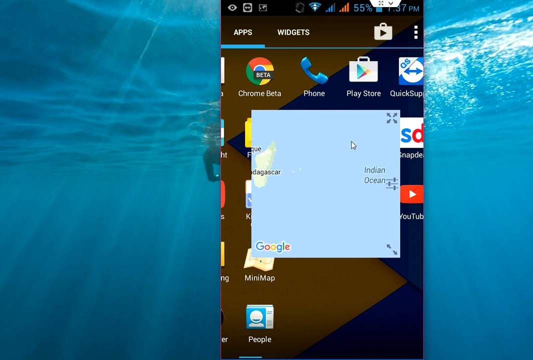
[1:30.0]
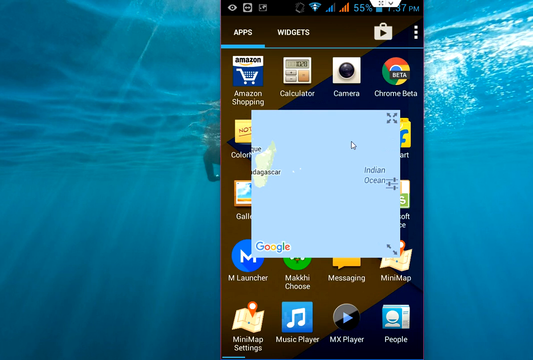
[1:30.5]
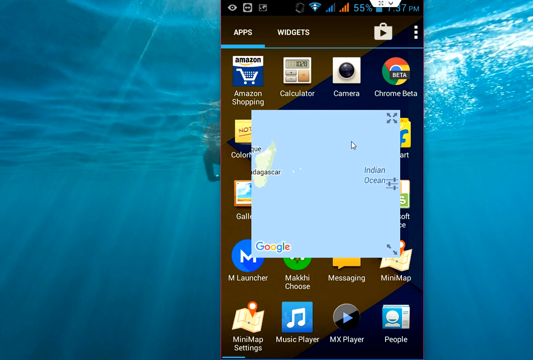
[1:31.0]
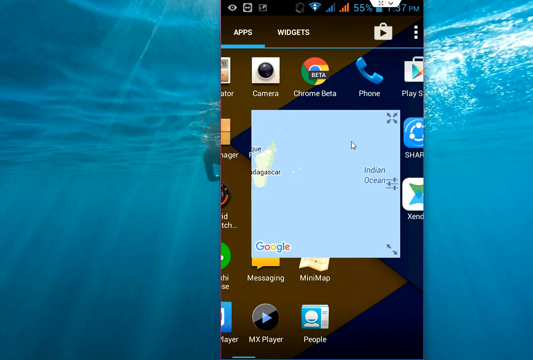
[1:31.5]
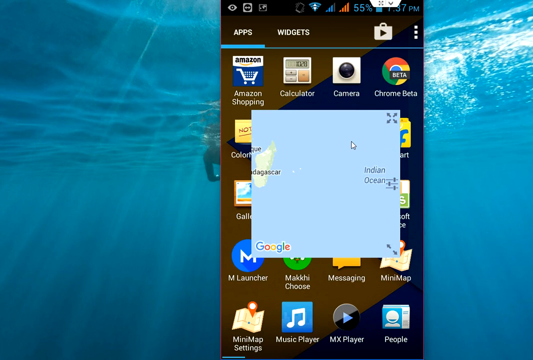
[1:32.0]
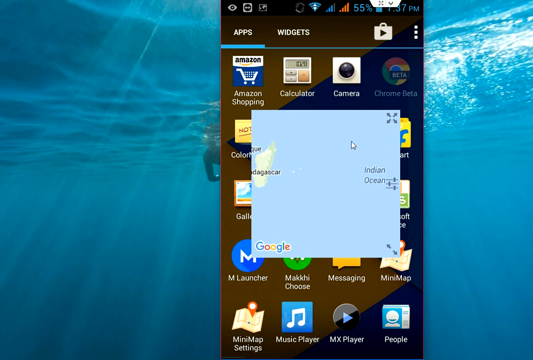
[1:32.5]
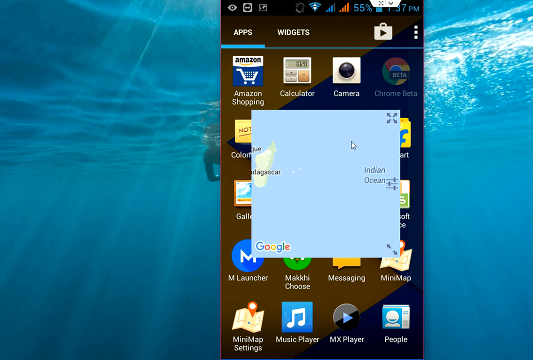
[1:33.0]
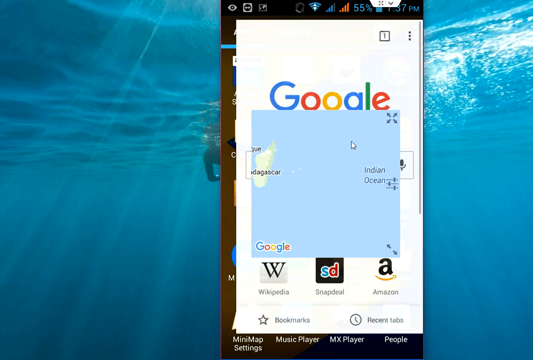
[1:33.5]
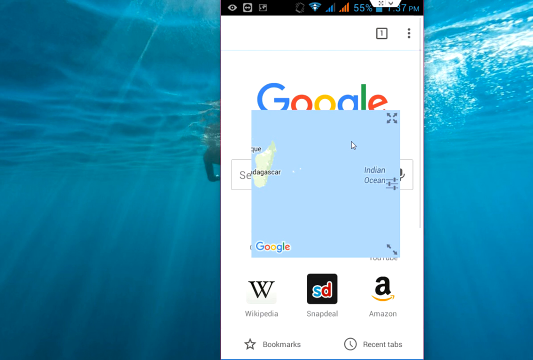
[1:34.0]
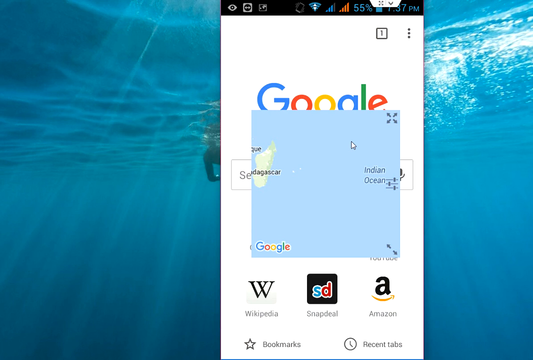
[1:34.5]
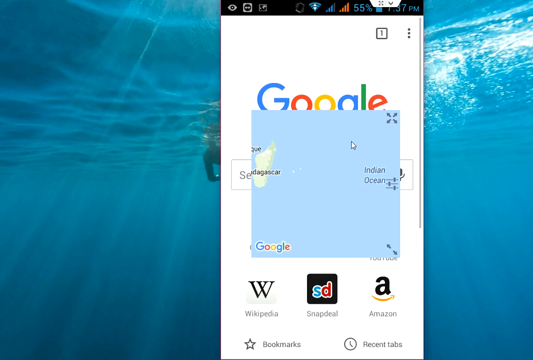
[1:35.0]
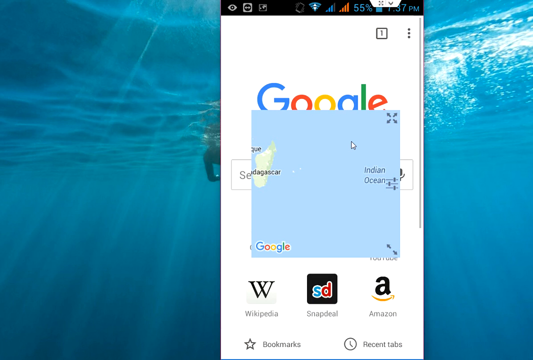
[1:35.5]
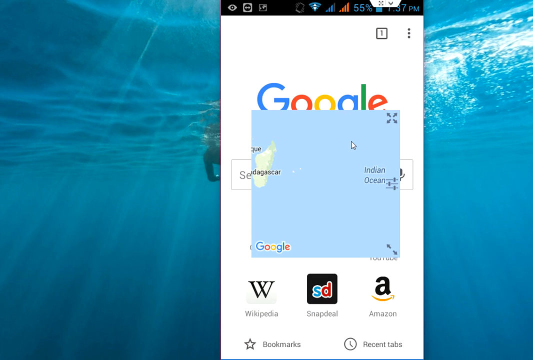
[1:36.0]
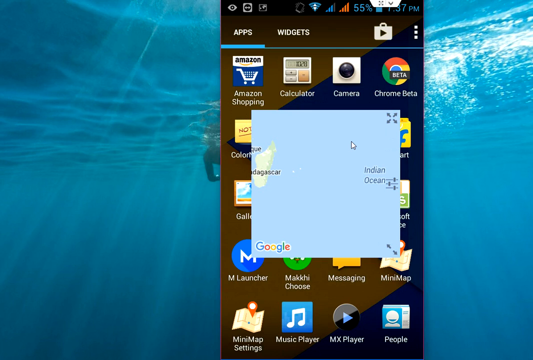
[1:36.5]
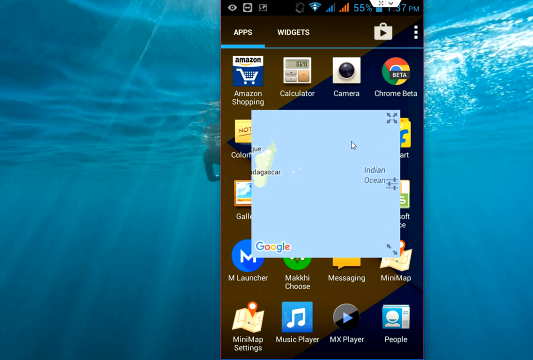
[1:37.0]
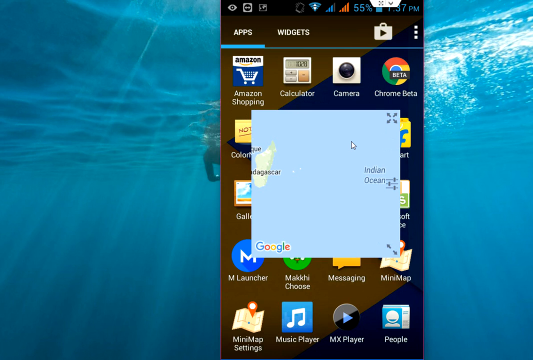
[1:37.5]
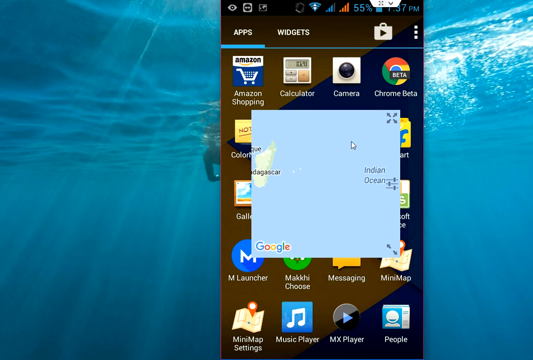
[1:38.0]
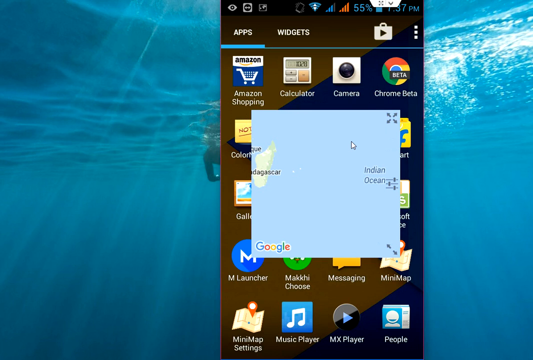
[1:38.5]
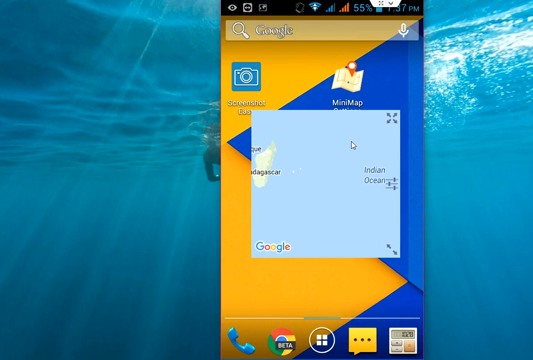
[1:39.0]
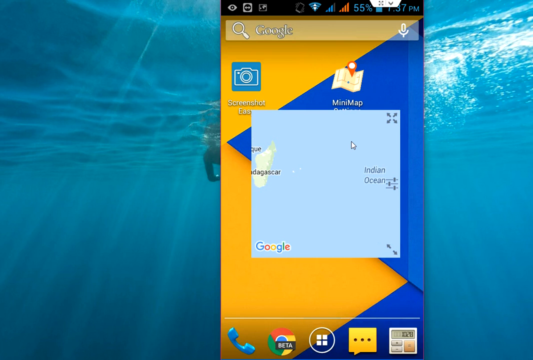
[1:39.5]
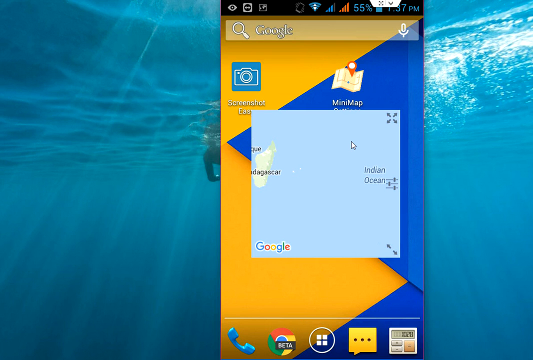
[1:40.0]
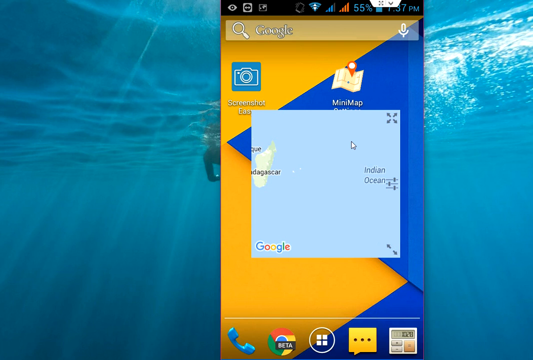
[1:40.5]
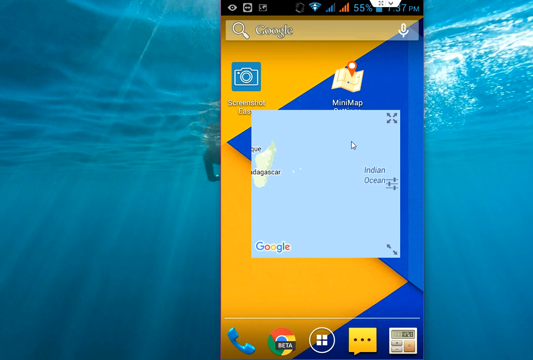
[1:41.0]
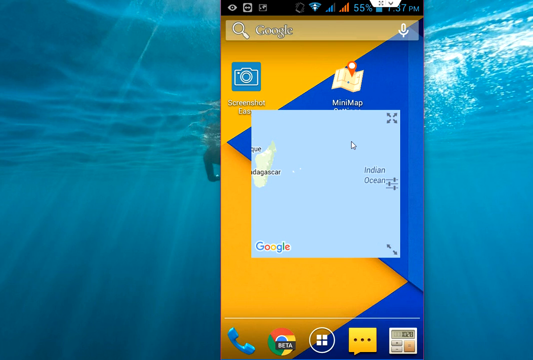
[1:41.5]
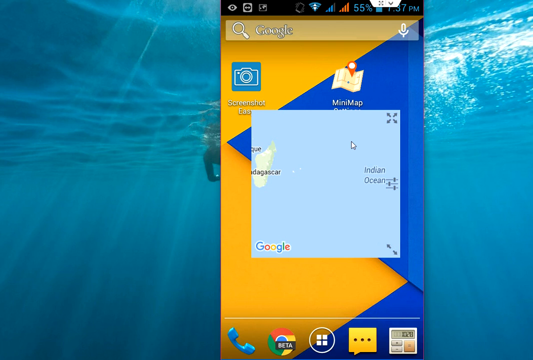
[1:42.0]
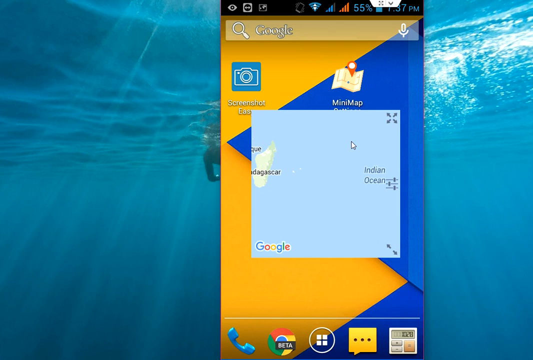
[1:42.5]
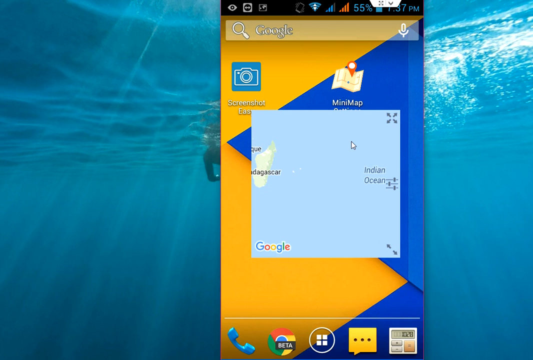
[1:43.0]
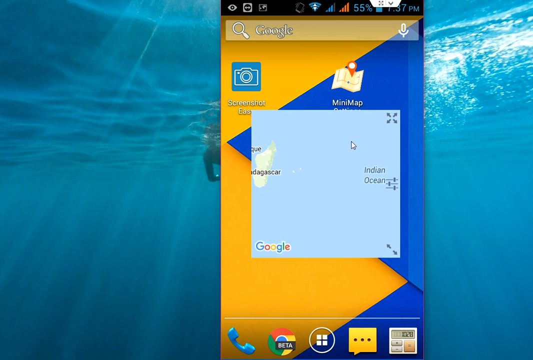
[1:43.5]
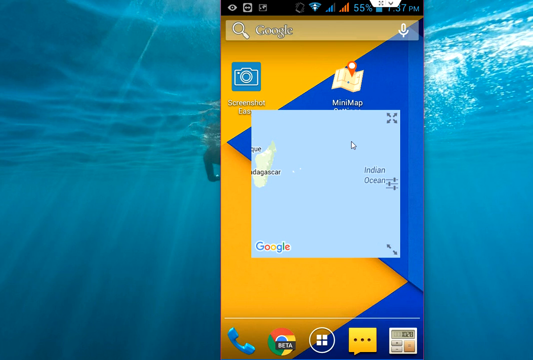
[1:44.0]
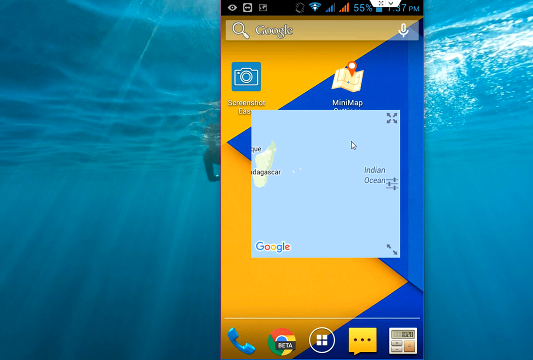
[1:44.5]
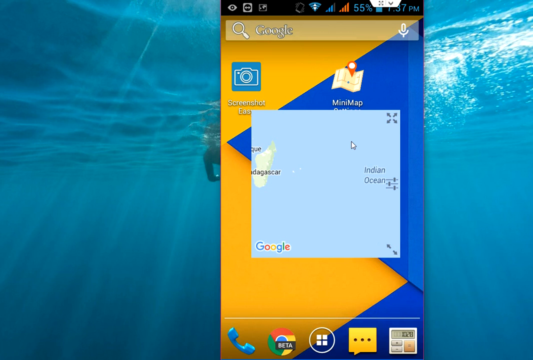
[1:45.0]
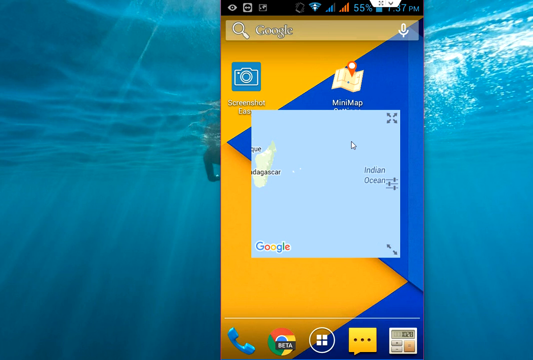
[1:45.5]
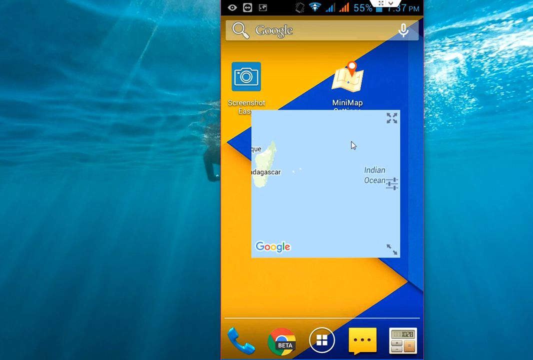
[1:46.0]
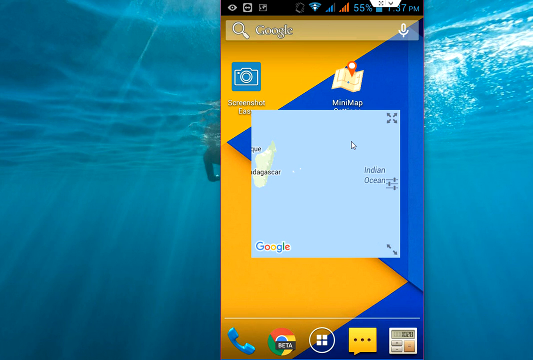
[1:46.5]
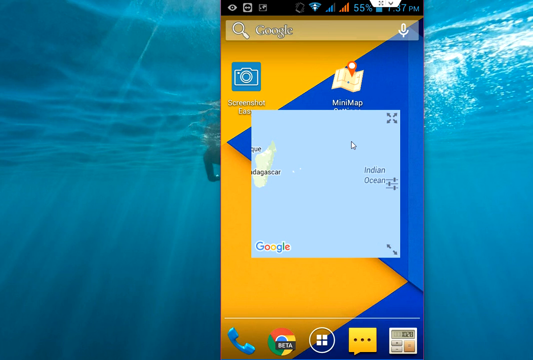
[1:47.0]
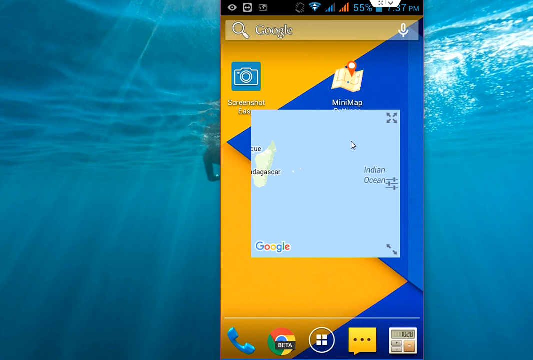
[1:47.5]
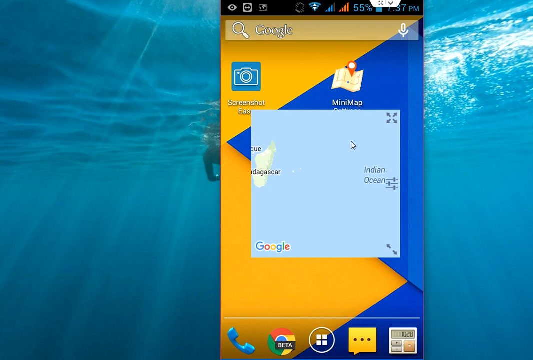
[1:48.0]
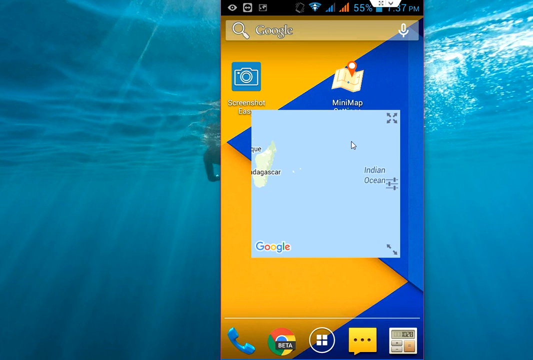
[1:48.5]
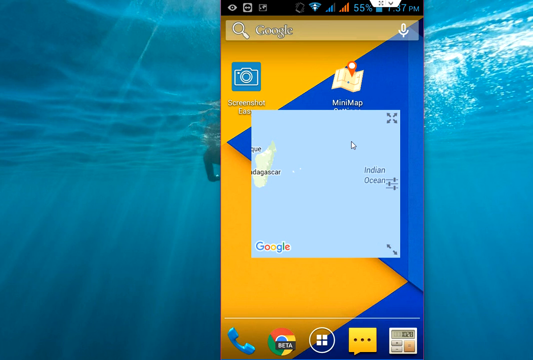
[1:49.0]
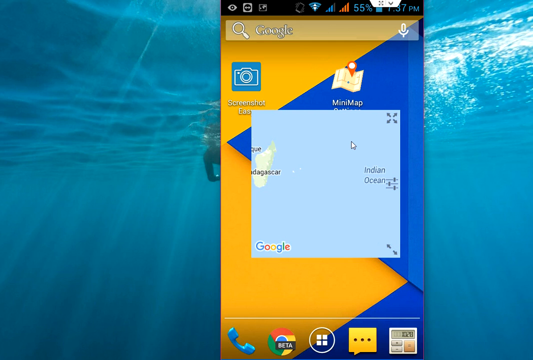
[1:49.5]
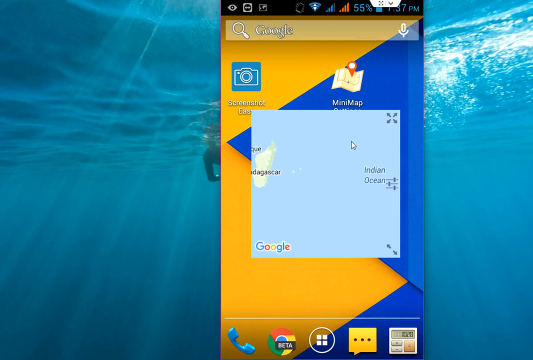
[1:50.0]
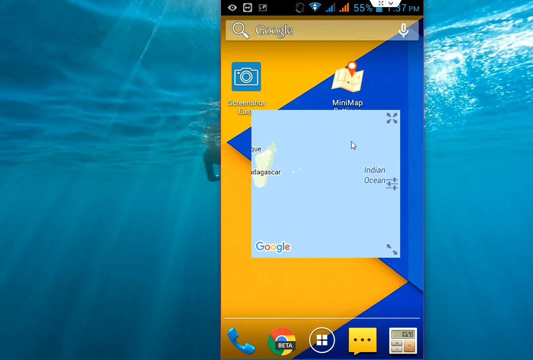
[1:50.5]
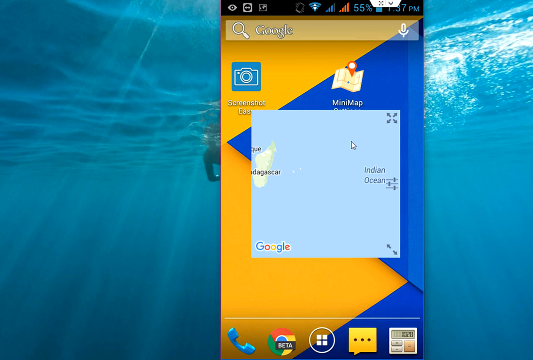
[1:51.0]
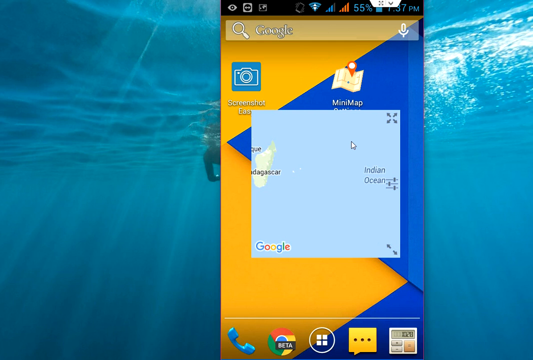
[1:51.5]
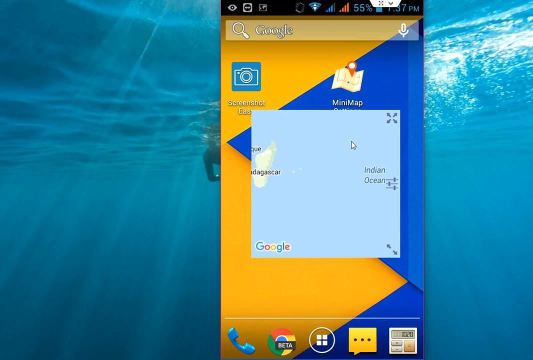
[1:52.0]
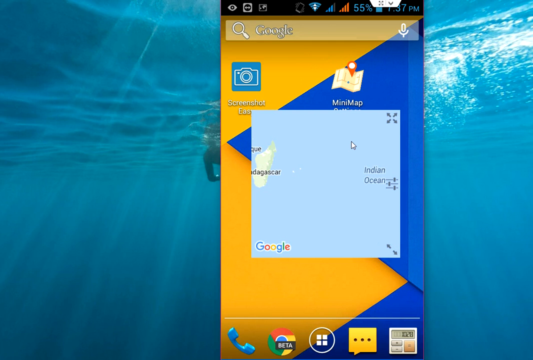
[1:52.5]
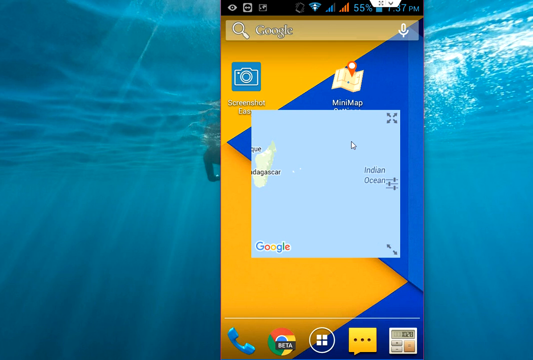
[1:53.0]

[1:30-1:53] The underwater scene remains in the background, with sun rays shining through the water. A swimmer is in the water just at the surface, wearing black neoprene; just their right arm and chest are visible, and they are likely wearing a scuba mask. There are scattered shots of sunlight across the top of the water, viewed from underwater looking up. The phone is laid across this image, center-right. Open on the phone is the map showing the Indian Ocean and Madagascar, with "Google" at the bottom of the map. The phone apps are visible: a line that says "apps", a line that says "widgets", and a briefcase with a play button. The apps that remain visible are Amazon Shopping, Calculator, Camera and Chrome Beta. The mouse arrow is in the middle of the Indian Ocean. The apps then shift behind the map. Next, a Google window opens behind the map, with Wikipedia, Snapdeal and Amazon along its bottom. The Google window is closed, leaving just the map with the Indian Ocean and Madagascar. Then the map is laid over the mini-map app icons with the gold triangles, saw-toothed with blue triangles. The screen remains frozen from there.